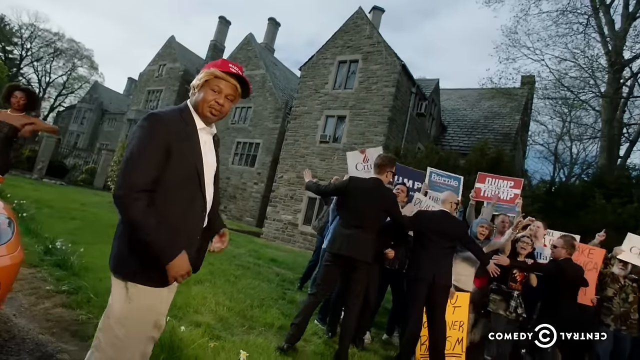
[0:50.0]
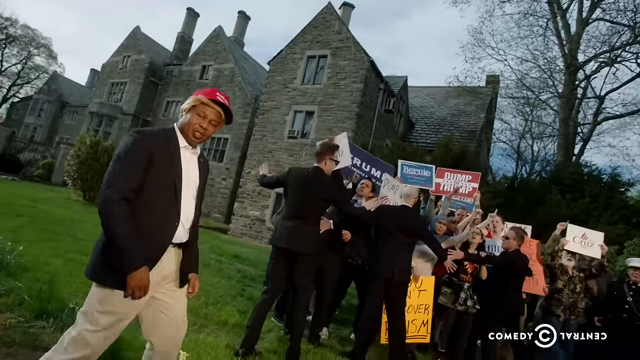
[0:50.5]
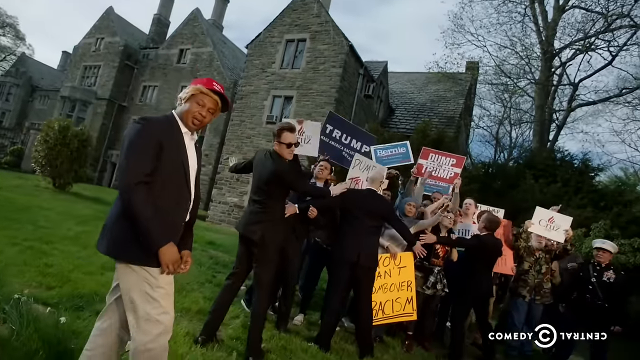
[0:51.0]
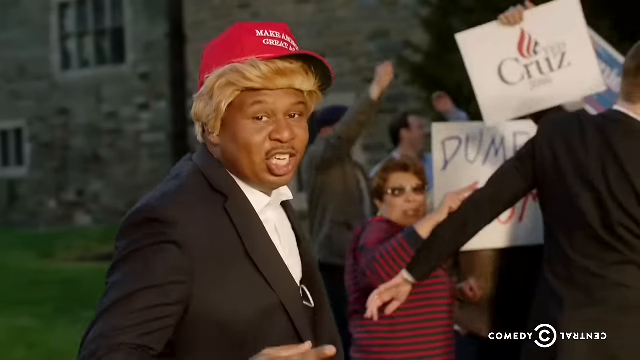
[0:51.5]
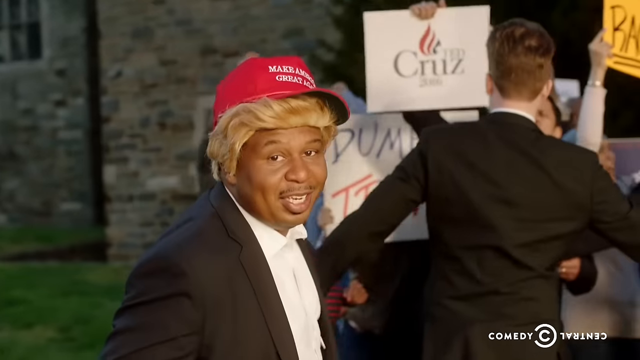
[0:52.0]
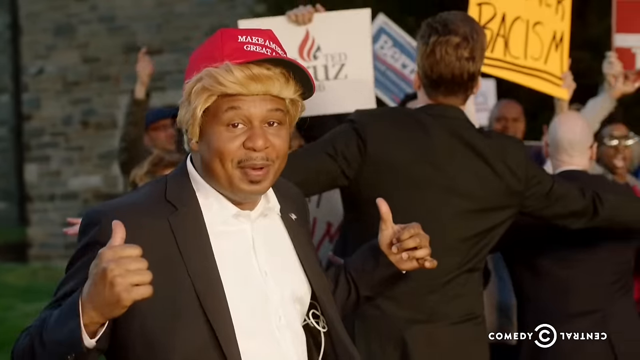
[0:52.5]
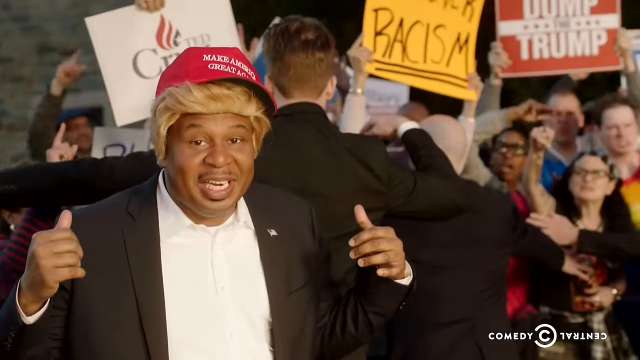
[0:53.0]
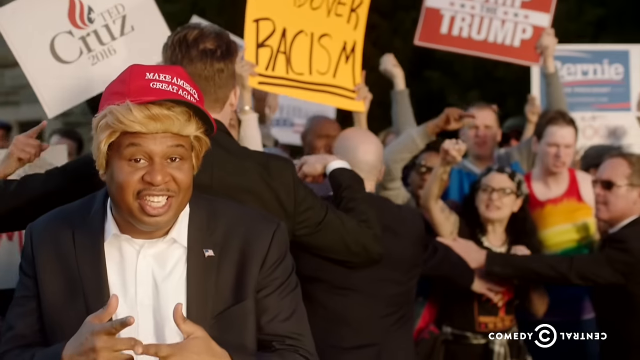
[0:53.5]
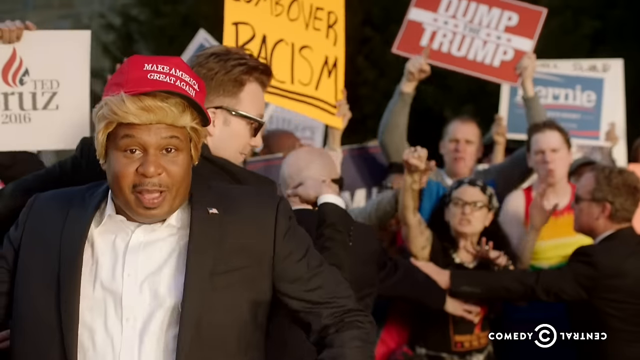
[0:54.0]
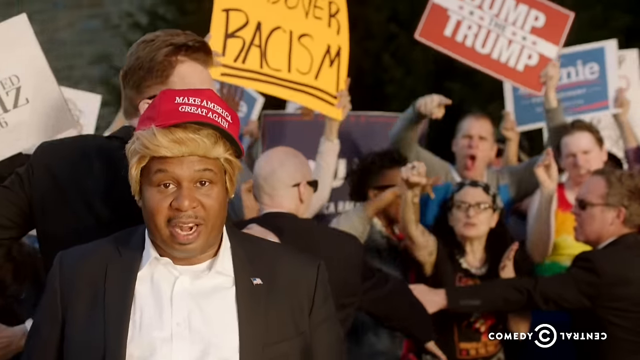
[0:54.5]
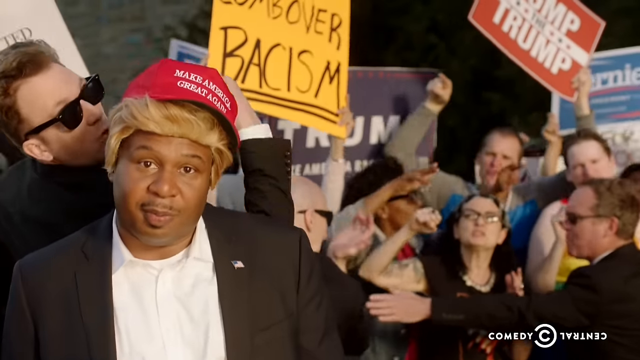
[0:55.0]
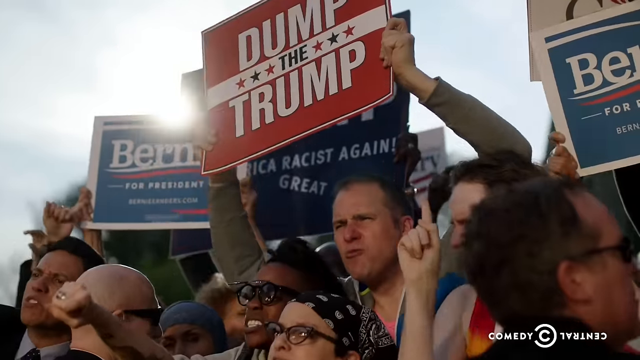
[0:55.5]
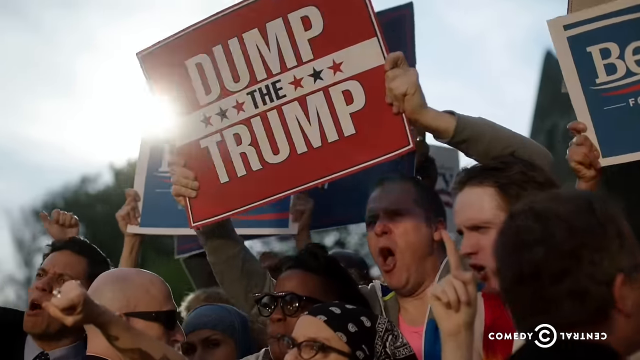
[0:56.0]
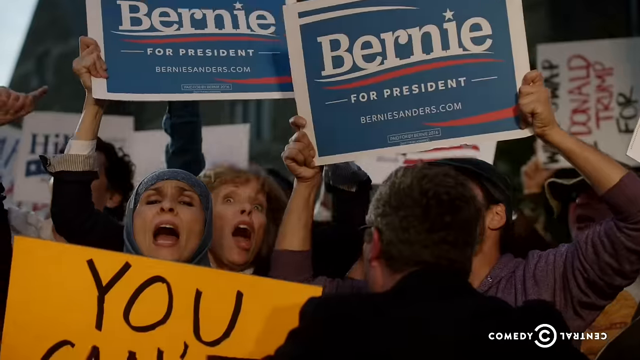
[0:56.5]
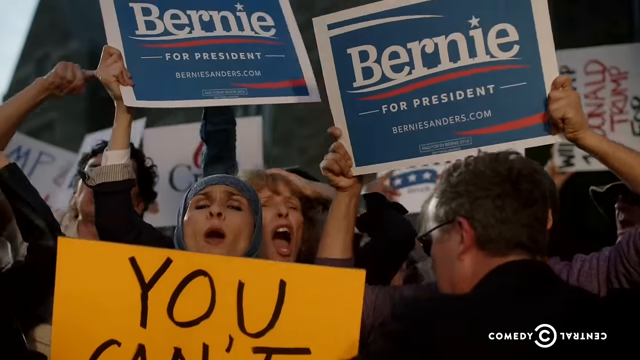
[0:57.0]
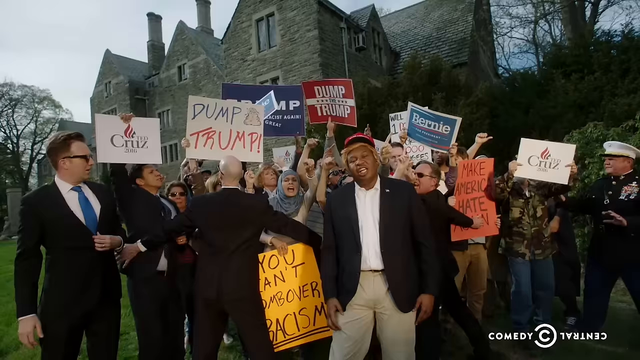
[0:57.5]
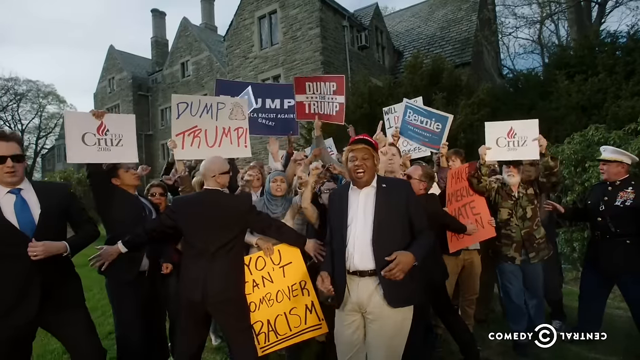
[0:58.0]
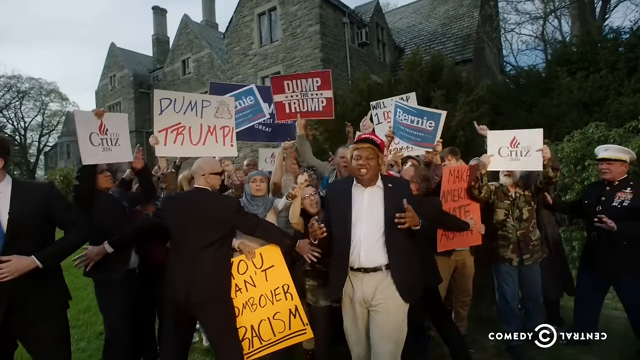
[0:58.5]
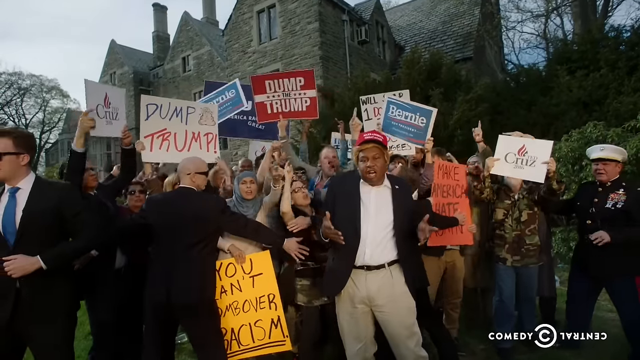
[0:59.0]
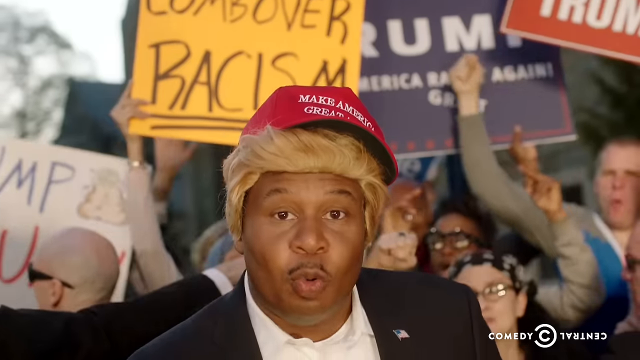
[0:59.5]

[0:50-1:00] Donald Trump walks toward a crowd of men and women in different types of clothing; some appear to be dressed semi-professionally and semi-casually, and some women wear long sweaters and sweatshirts. Signs show support for other candidates, including signs reading "dump the Trump," "stop racism" and "dump Trump," as well as a sign supporting Bernie Sanders. Black Donald Trump appears to be behind several of his bodyguards, who are holding the crowd back, as he continues rapping. He appears to wear a red hat with white lettering reading "Make America Great Again." More of the crowd and their signs are displayed, including several Bernie Sanders signs and a red sign reading "dump Donald Trump." The crowd is made up of white individuals and a mixture of brown and black individuals, all showing anger and disgust.